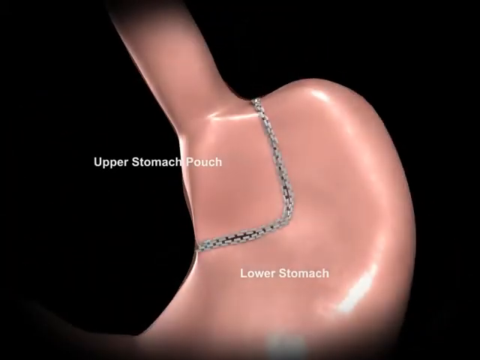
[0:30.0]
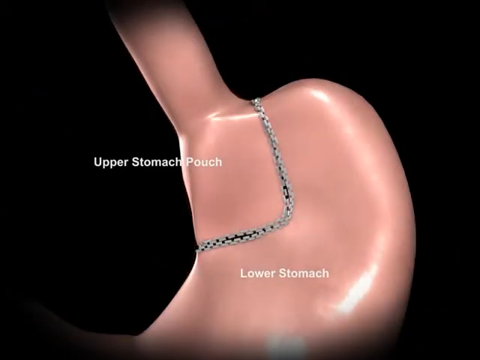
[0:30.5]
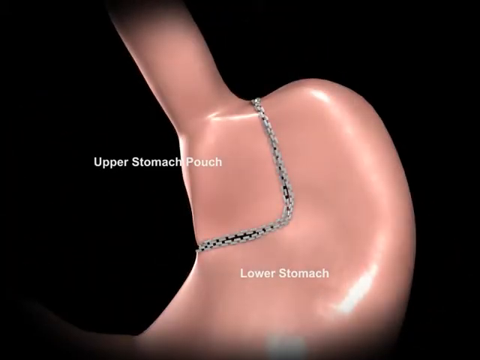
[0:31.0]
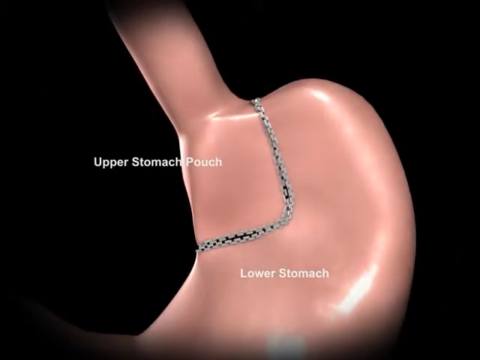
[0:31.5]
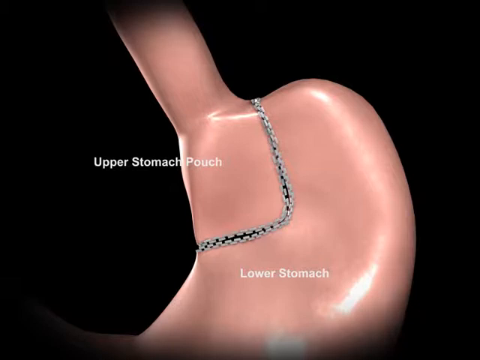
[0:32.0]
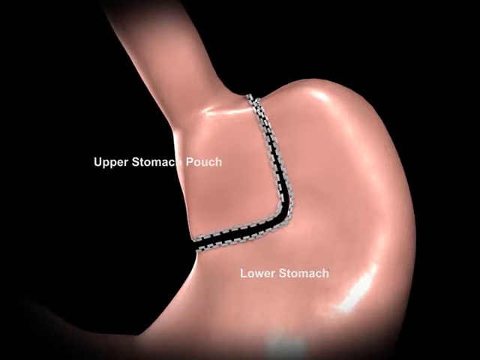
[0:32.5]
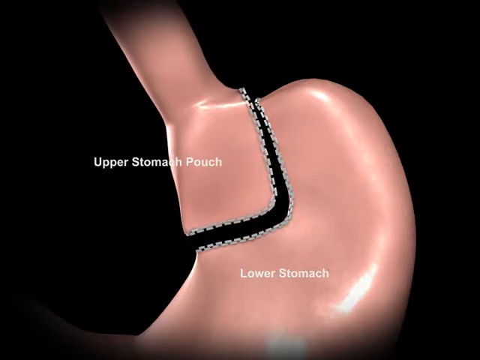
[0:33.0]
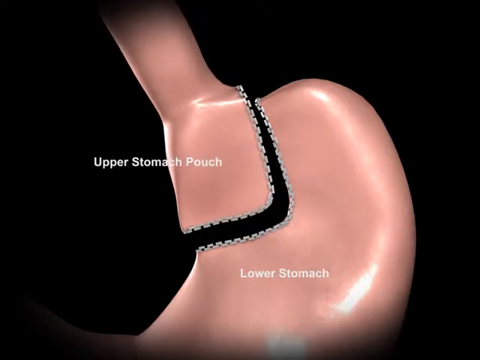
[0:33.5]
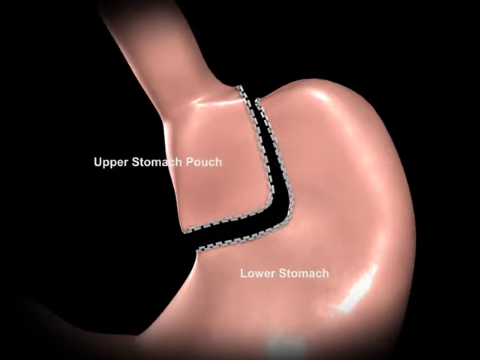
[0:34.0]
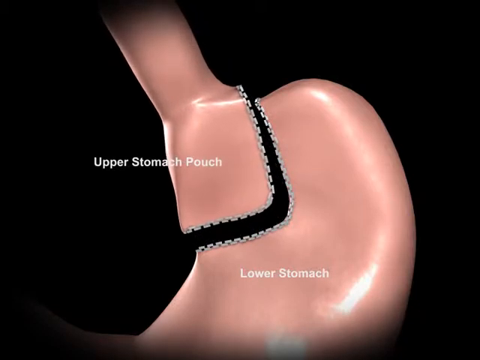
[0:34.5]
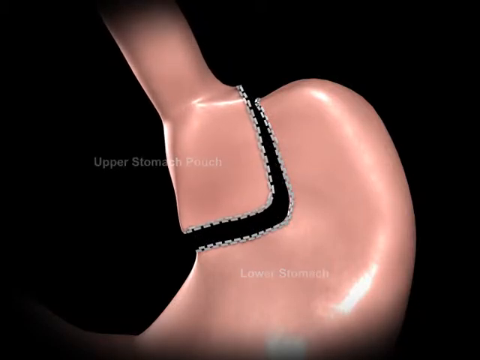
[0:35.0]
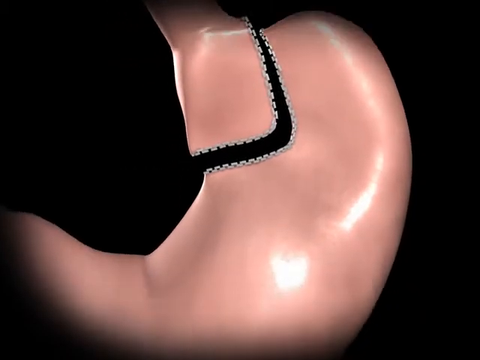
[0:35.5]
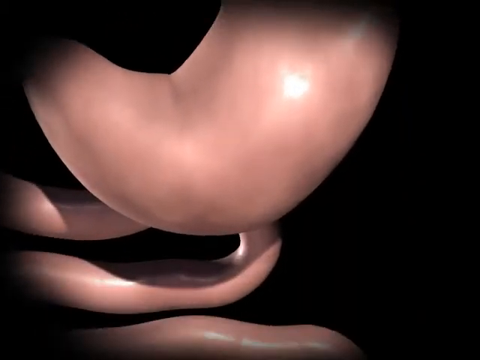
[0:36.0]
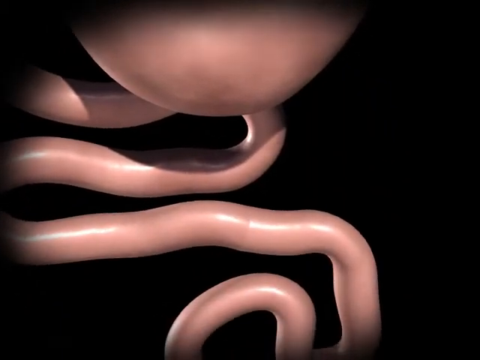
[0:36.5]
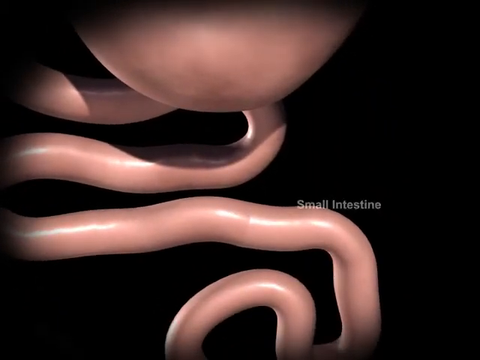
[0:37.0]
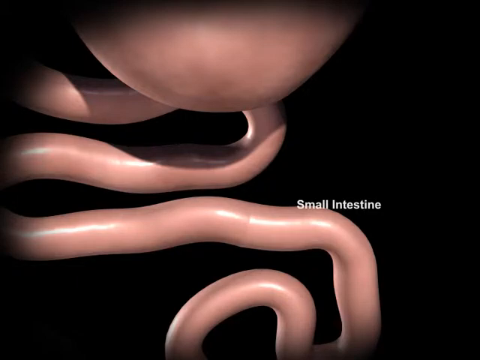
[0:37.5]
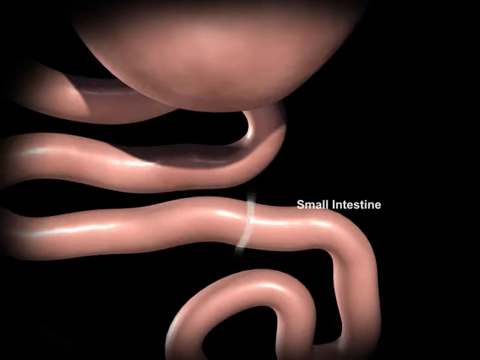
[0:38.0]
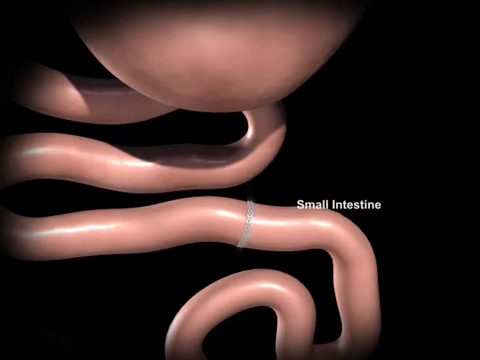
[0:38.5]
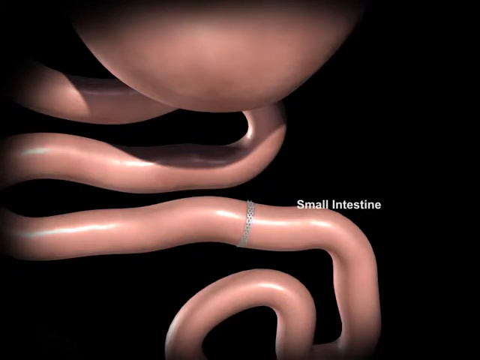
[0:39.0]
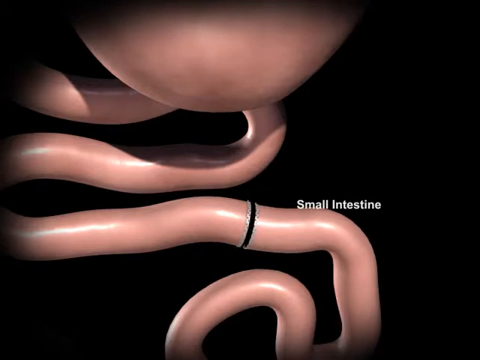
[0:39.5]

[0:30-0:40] The animation shows the upper stomach pouch and the lower stomach pouch, with the upper stomach pouch getting removed as part of the gastric bypass. It then shows where the small intestine is kind of cut, and this portion of the stomach pouch is probably kind of connected. The animation is not yet finished as the segment ends on a screen showing the top part of the upper stomach and the small intestine being cut open or off.